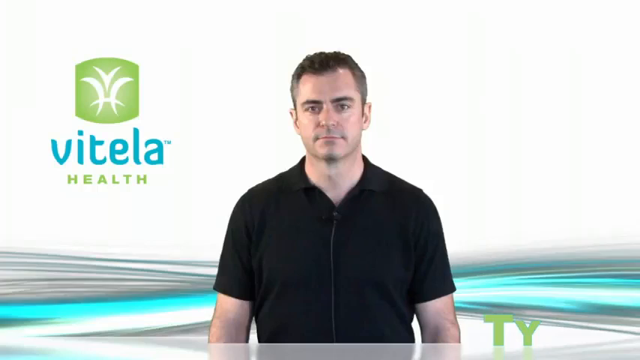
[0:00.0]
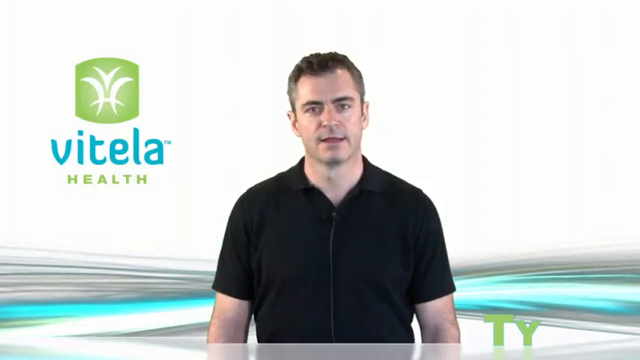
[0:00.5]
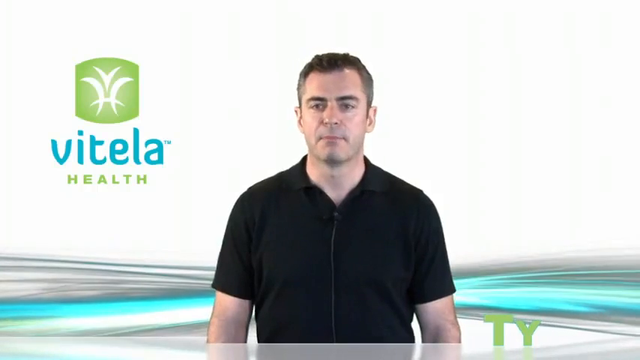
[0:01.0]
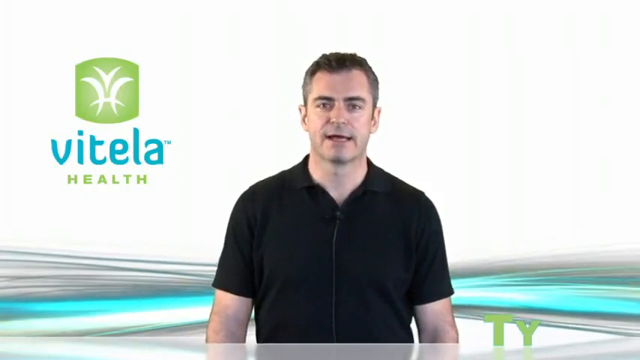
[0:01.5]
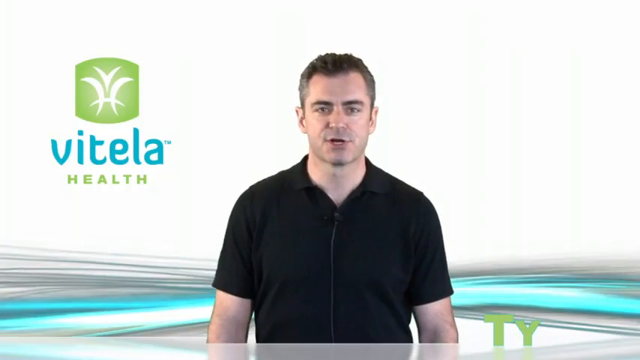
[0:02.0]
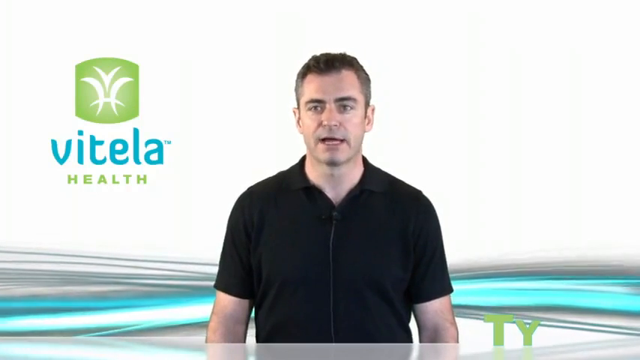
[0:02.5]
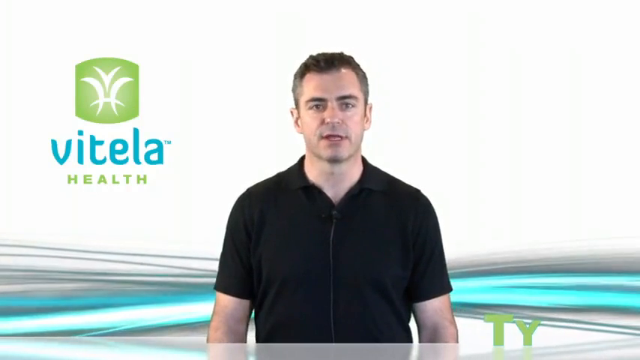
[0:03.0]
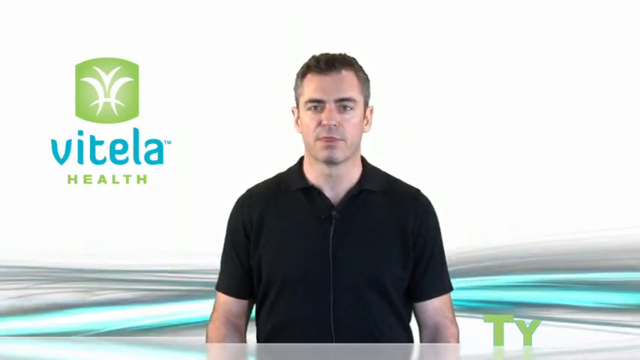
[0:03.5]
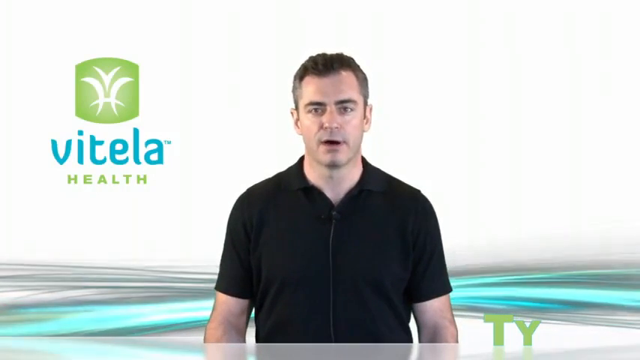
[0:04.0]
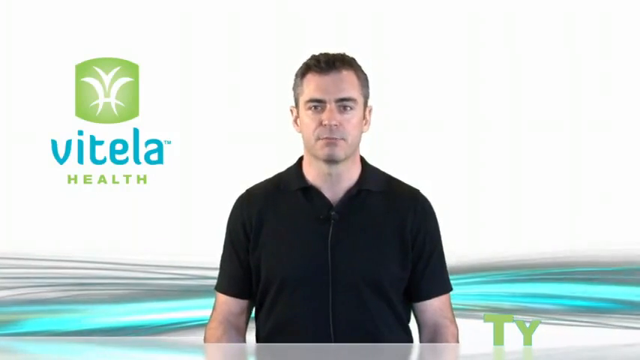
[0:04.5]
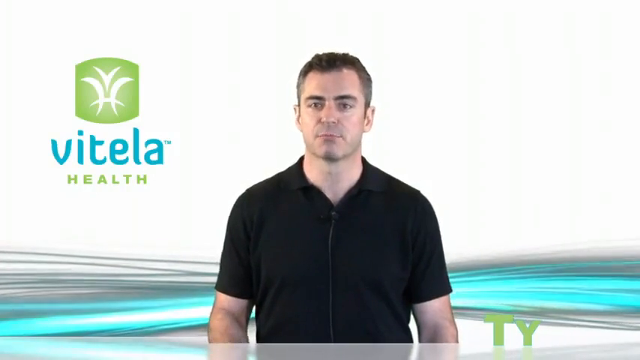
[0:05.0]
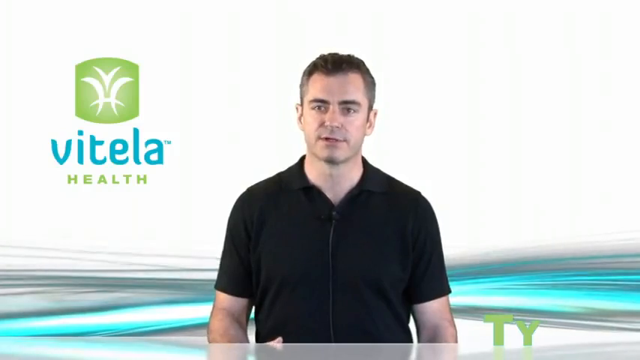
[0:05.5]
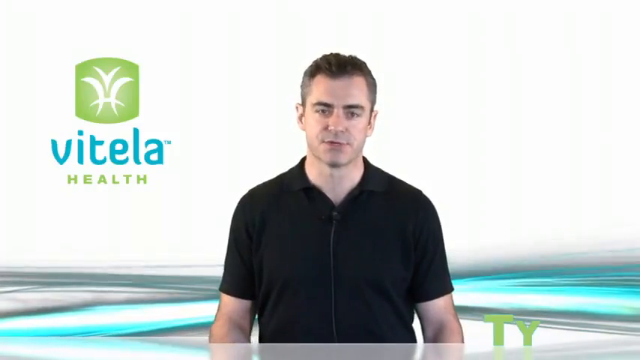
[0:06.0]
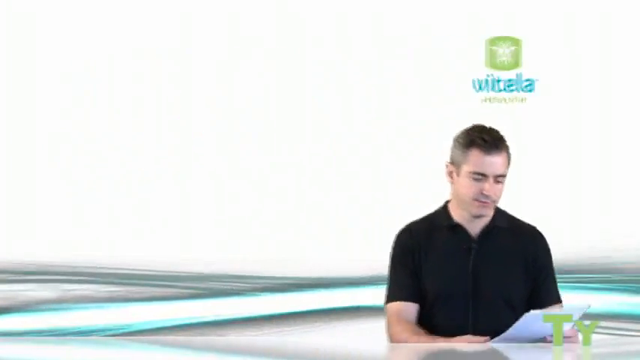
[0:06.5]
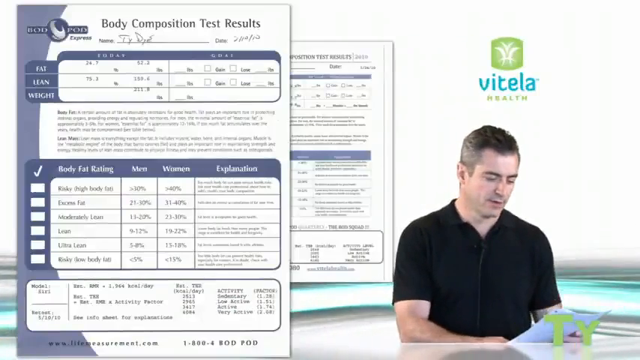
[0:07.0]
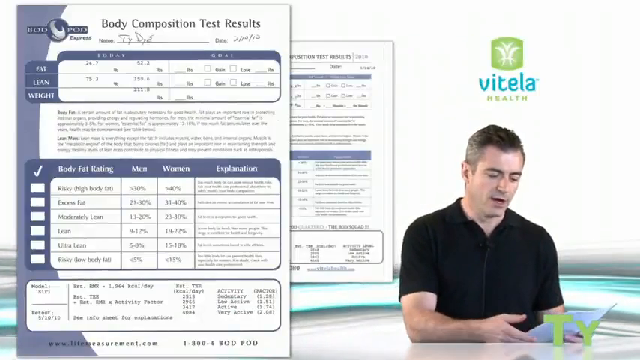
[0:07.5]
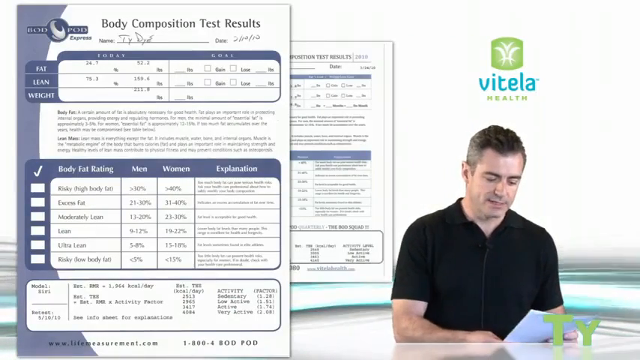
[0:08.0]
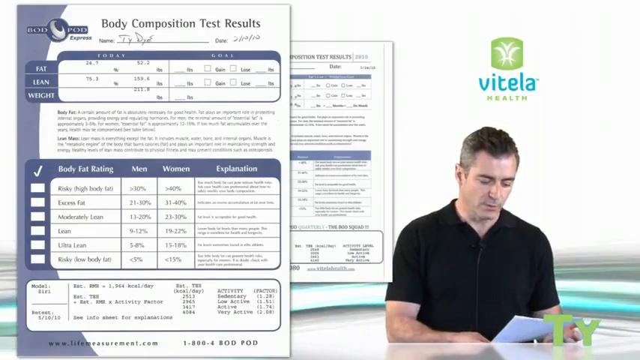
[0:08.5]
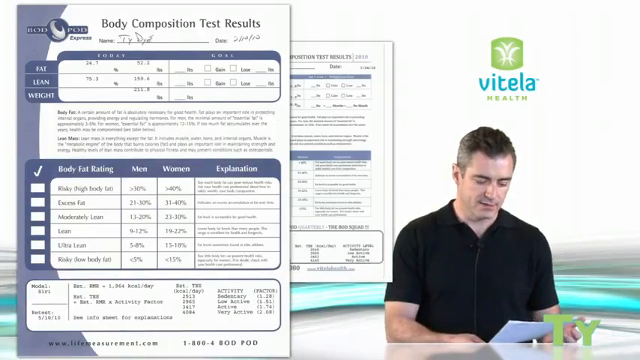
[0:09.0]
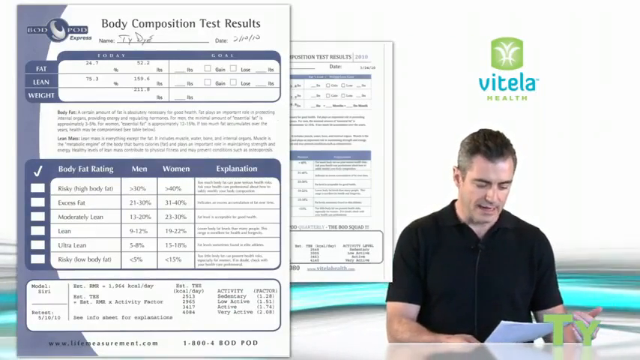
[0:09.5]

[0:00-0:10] A man stands in the center of the frame. He has short, dark hair cropped close to his head and bushy dark eyebrows, and he wears a short-sleeved shirt with a zipper in the front. Next to him, on his right and the left of the screen, is a green and white logo. Below it, "vitela" appears in blue, and the word "health" appears below that in green. The man is in front of a mostly white screen; at the bottom, rays of turquoise, gray, and white move around, giving the impression of flowing water. The man talks to the screen and nods his head as he speaks. Then he and the logo both shrink and move over to the right-hand side of the screen, and on the left-hand side an image appears that says "Body Composition Test Results" at the top.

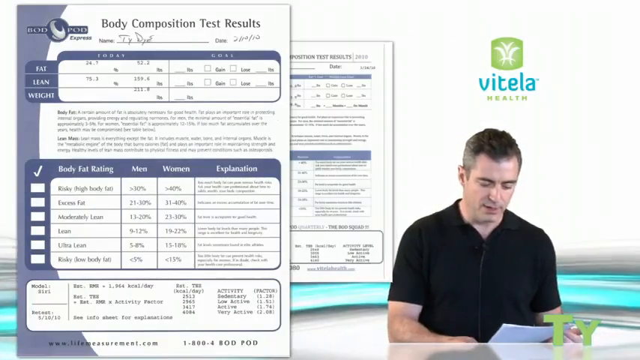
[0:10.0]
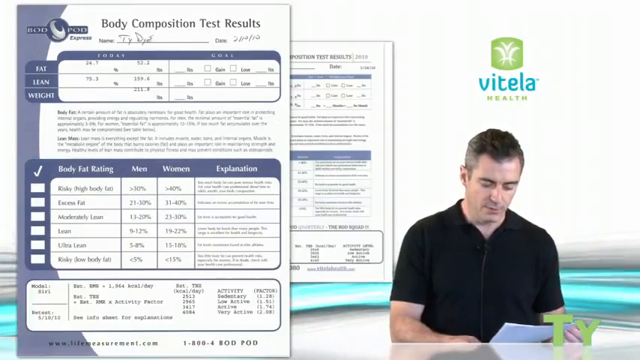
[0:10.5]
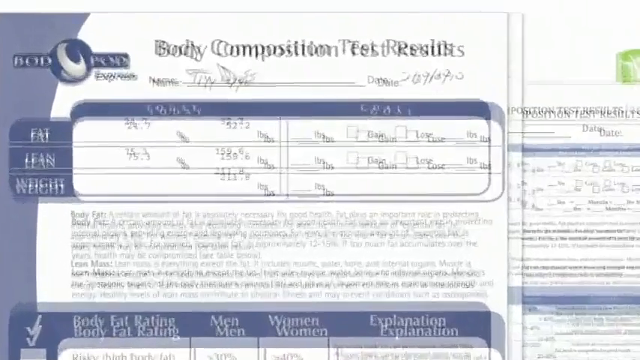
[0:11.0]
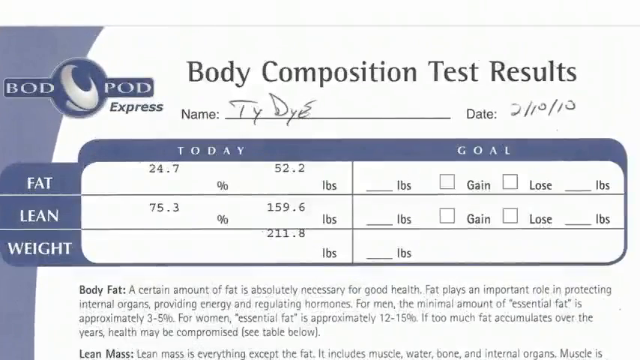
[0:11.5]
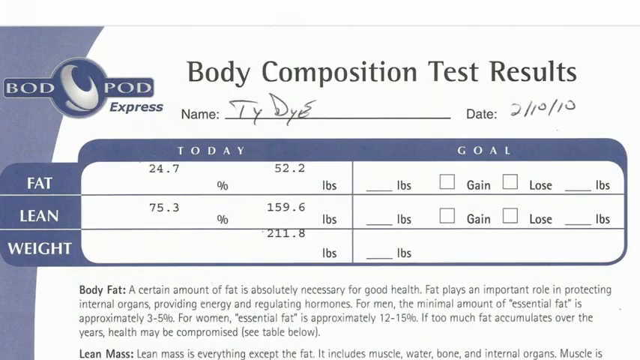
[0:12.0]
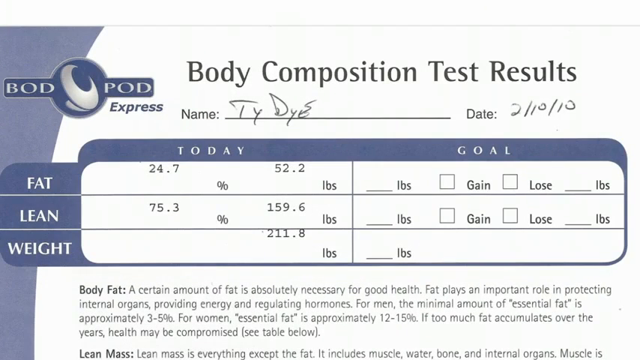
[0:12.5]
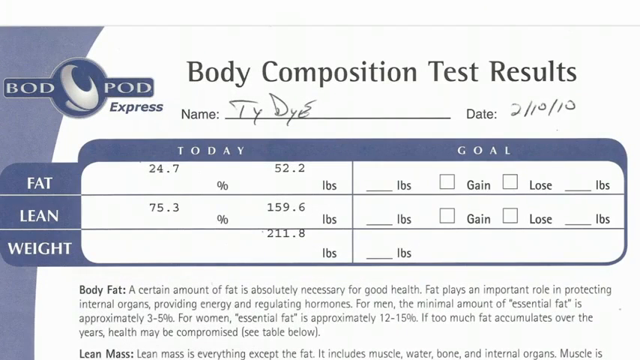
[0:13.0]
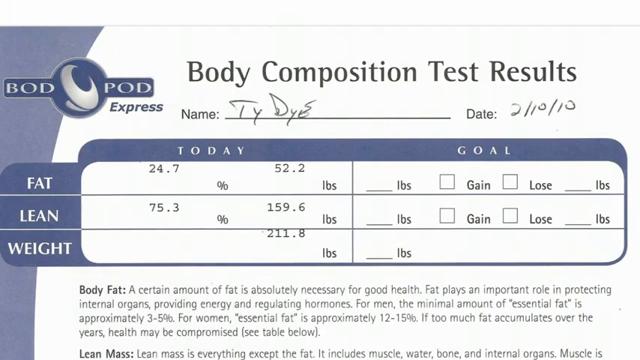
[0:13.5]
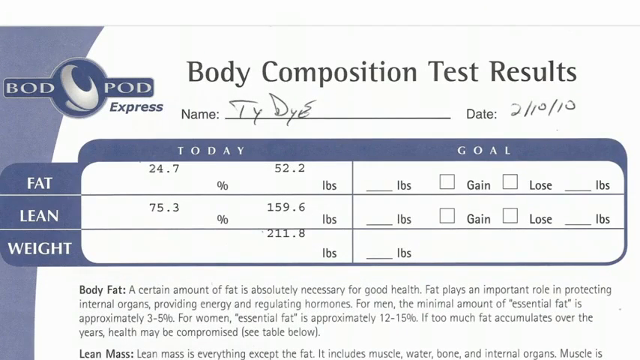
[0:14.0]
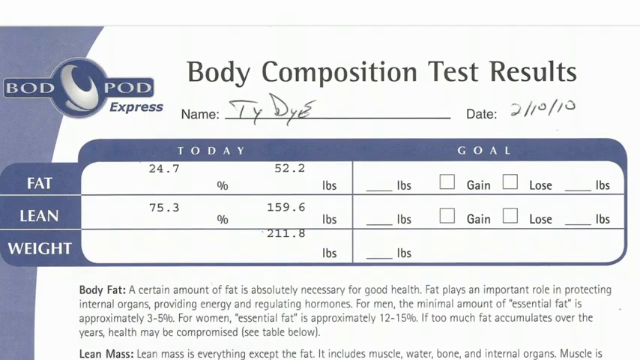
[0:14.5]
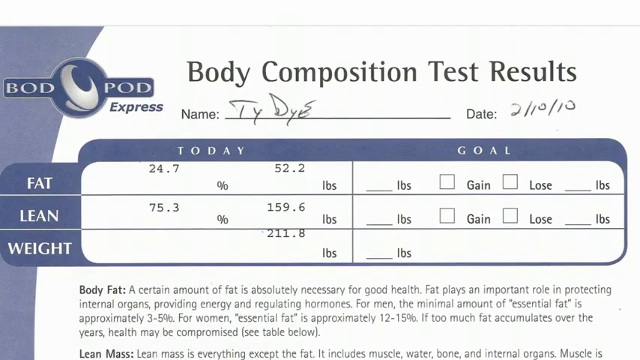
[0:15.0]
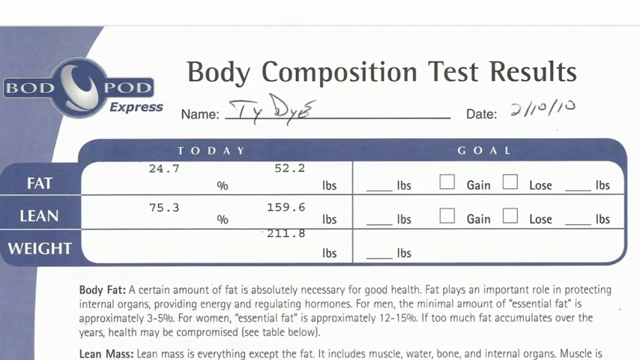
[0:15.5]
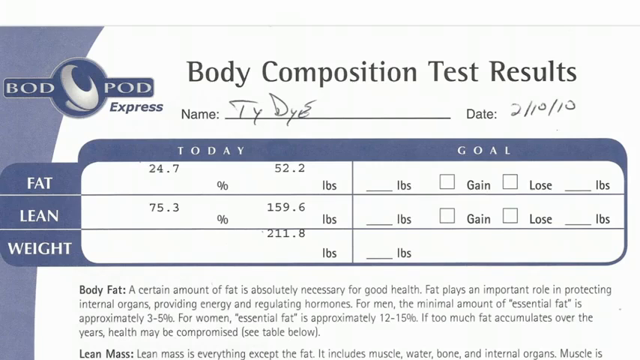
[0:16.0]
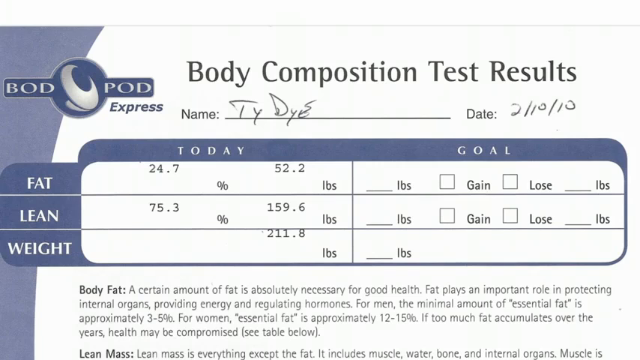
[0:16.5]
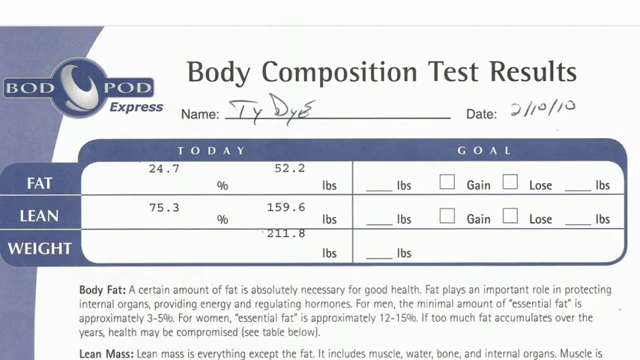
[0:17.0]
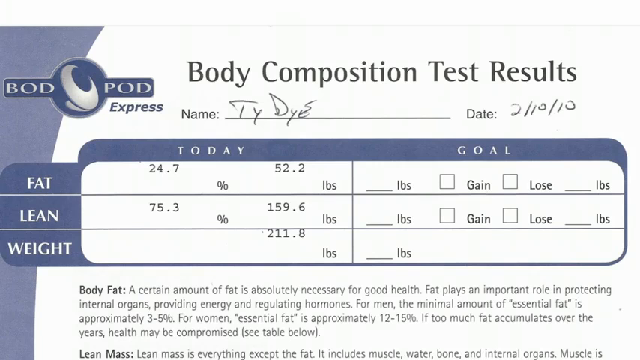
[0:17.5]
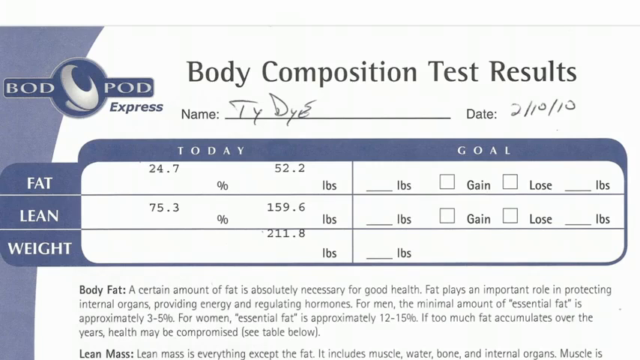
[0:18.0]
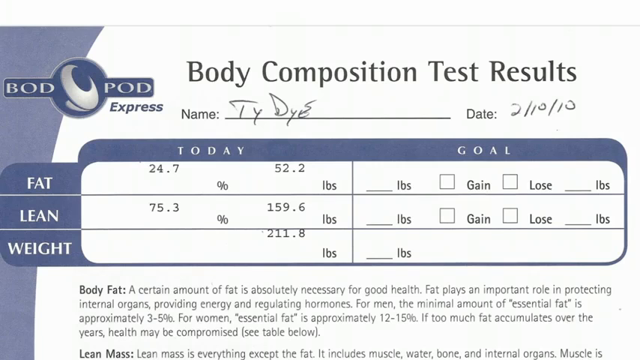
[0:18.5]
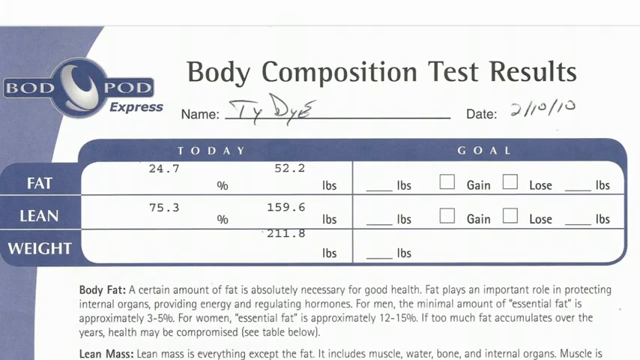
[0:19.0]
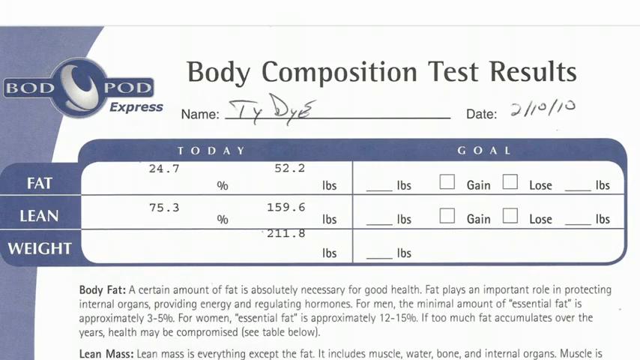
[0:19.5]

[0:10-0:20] The man in the dark shirt is in the lower right-hand side, looking down and reading something. He disappears, and from the left side of the screen the paper comes into close-up. At its upper left it says "BODPOD". The title is "Body Composition Test Results", with "Name, Ty Dye" and "Date, 2-10-10". Below that is a series of three horizontal lines. At the top, "today" is on the left-hand side and "goal" is on the right-hand side. The first line reads fat, "24.7%, 52.2 pounds". Below that it says lean, "75.3%, 159.6 pounds". Under that, for weight, the left-hand side is empty and the right-hand side says "211.8".